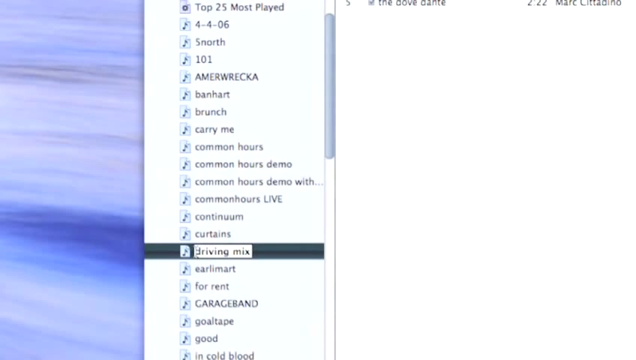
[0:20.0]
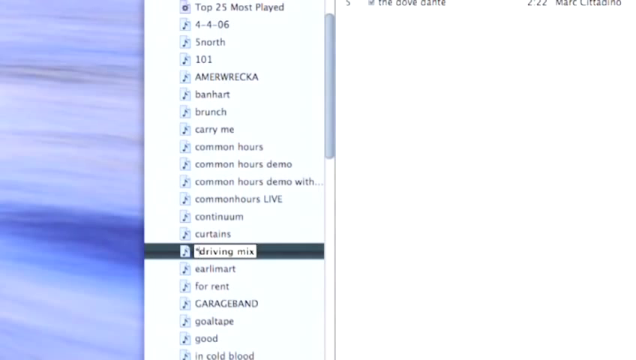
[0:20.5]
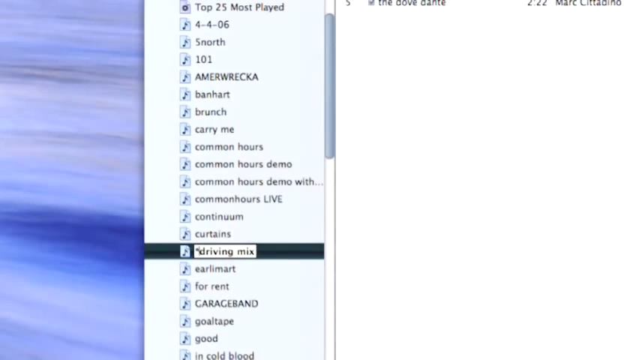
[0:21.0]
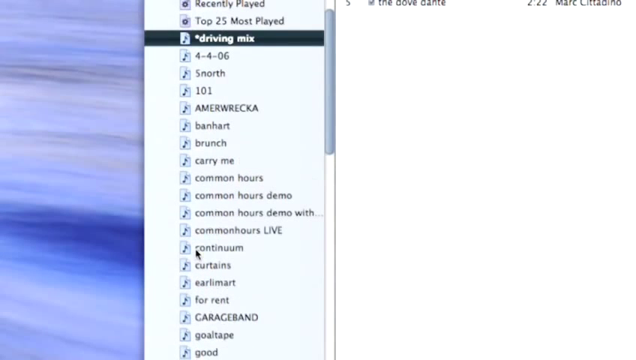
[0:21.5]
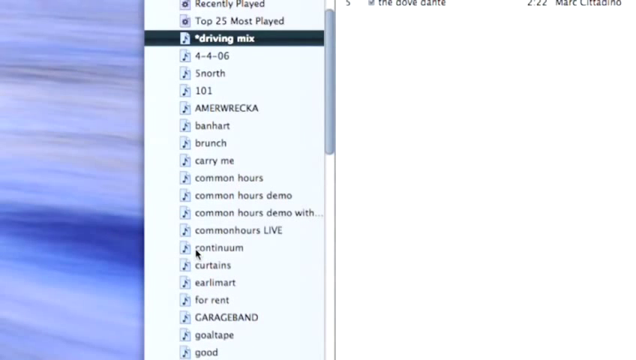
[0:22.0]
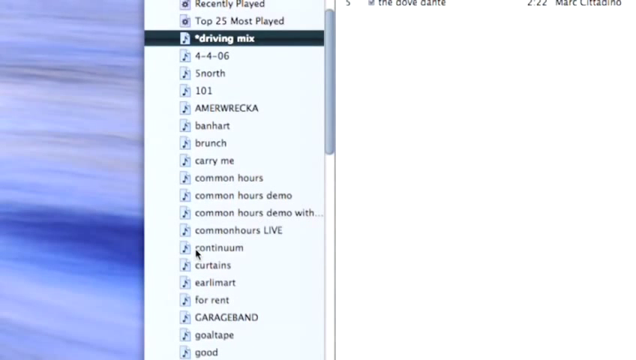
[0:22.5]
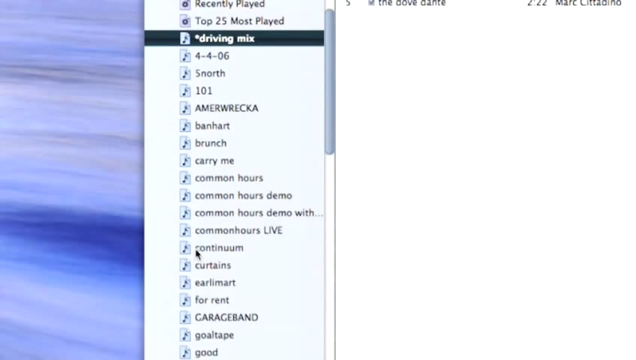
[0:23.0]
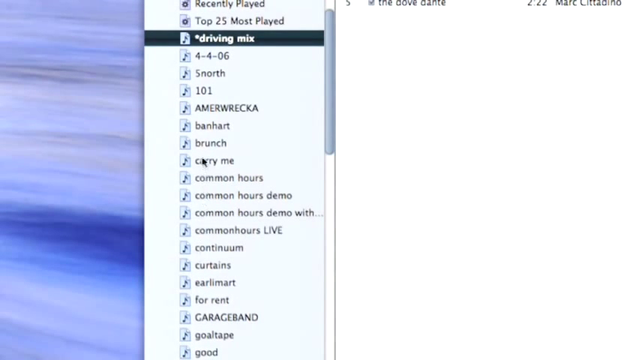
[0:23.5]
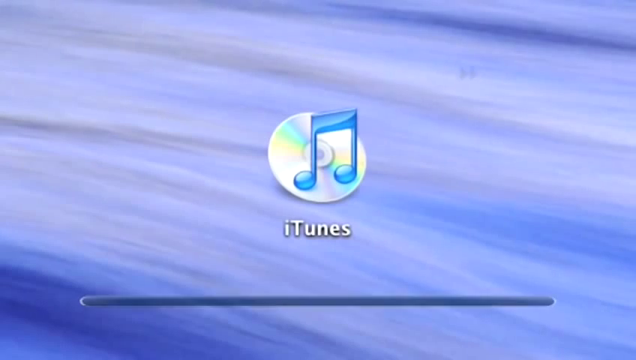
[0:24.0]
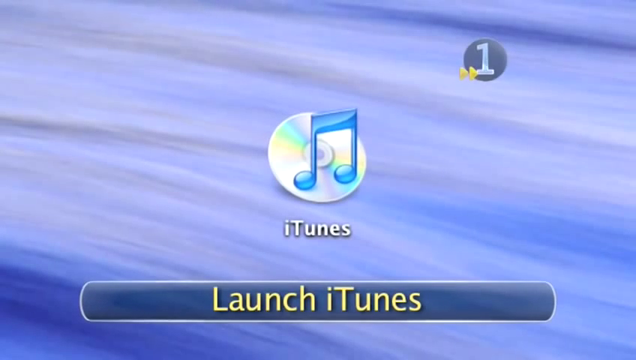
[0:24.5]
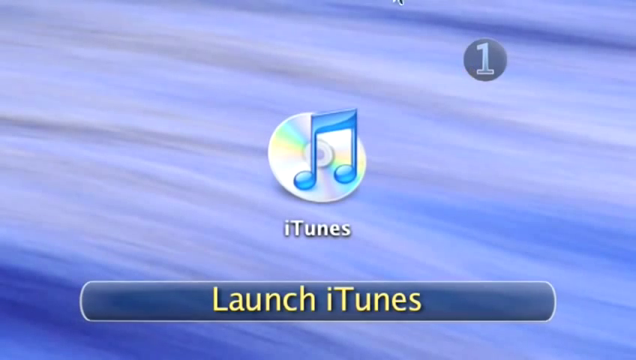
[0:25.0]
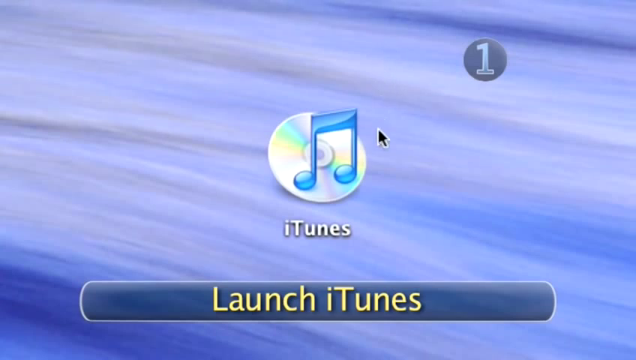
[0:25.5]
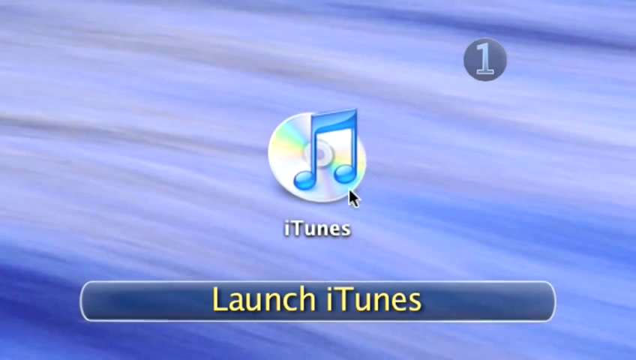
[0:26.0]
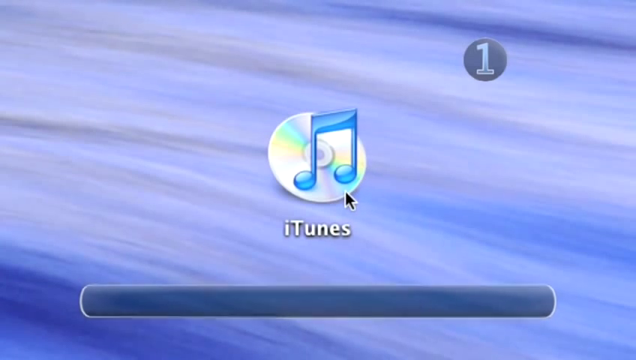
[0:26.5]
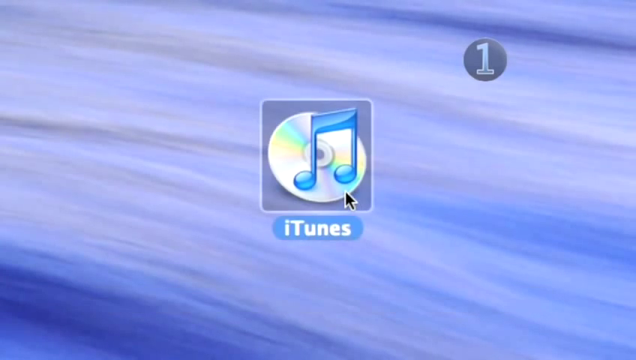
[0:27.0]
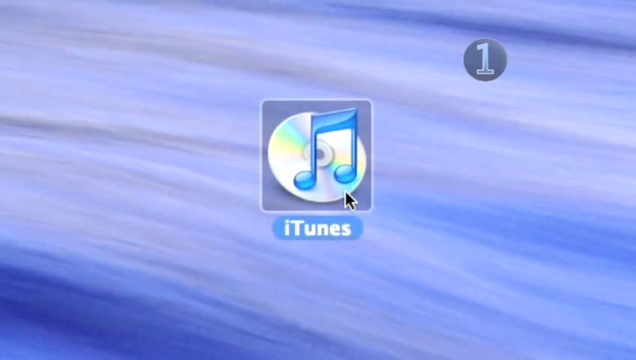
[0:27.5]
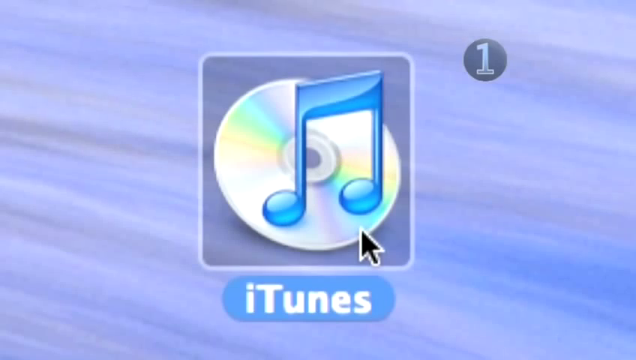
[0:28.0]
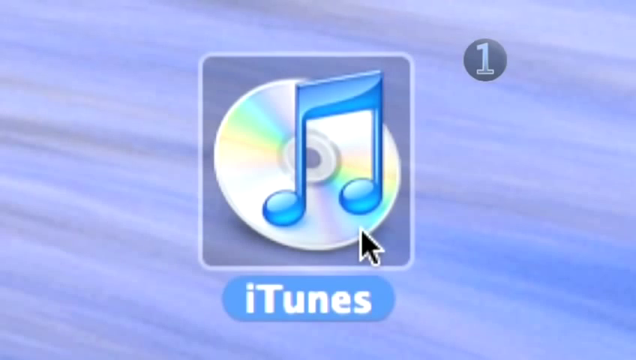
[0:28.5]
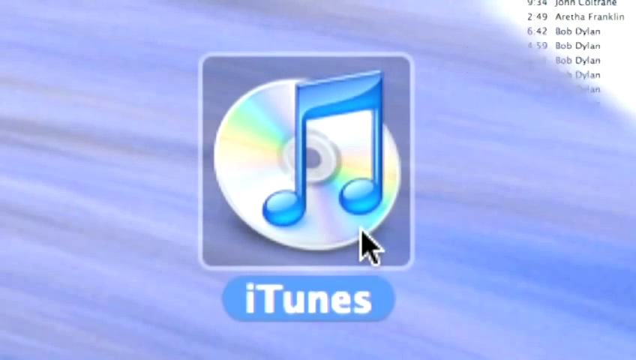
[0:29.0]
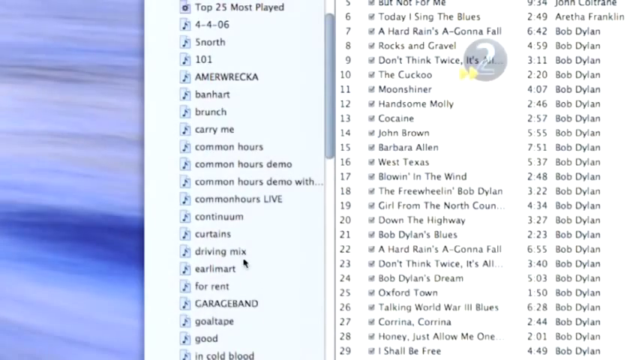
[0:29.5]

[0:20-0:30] The girl makes a selection on the computer screen, apparently a file called driving mix, though it is not very clear. After the driving mix file is selected, iTunes launches. An icon is shown and the pointer clicks on it. The number one appears, and on-screen text reads "launch iTunes", "click on the icon" and "select a playlist".